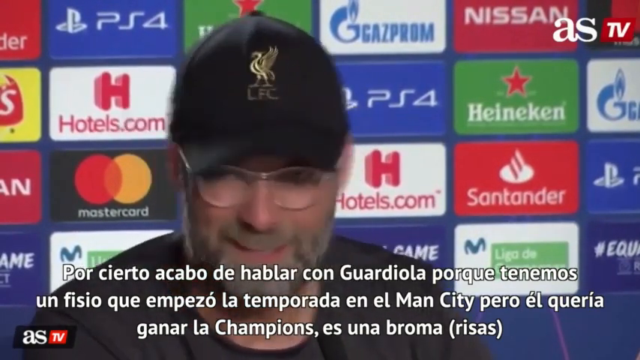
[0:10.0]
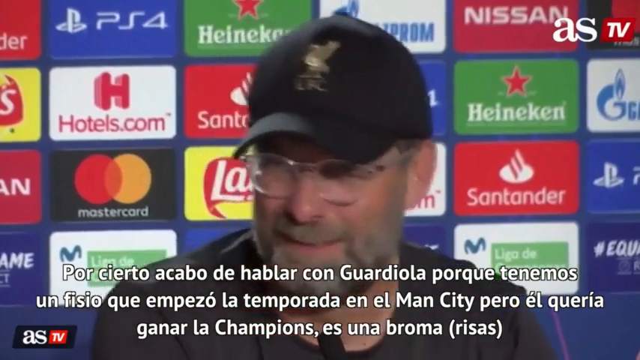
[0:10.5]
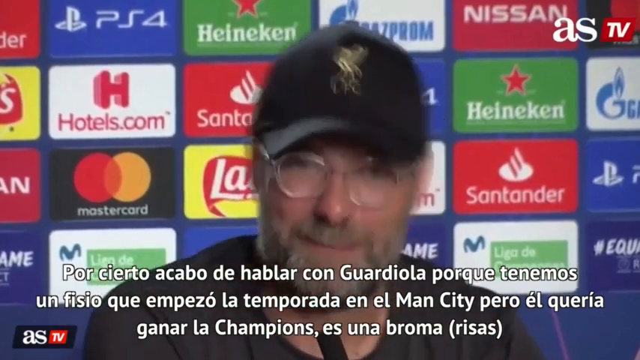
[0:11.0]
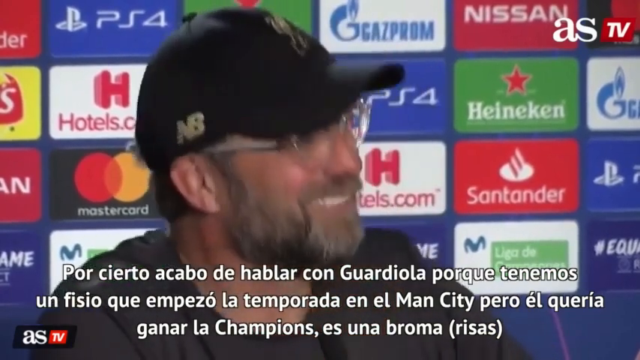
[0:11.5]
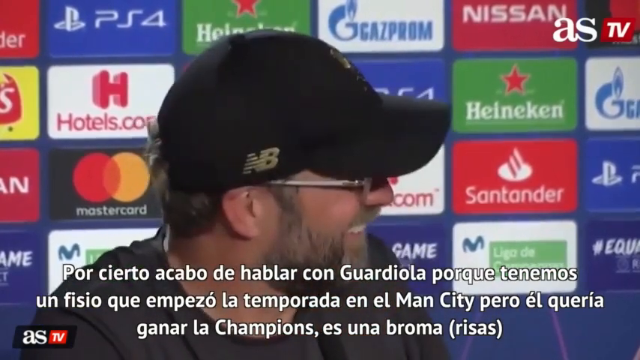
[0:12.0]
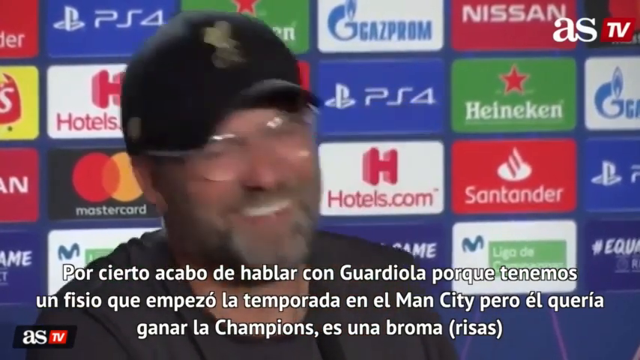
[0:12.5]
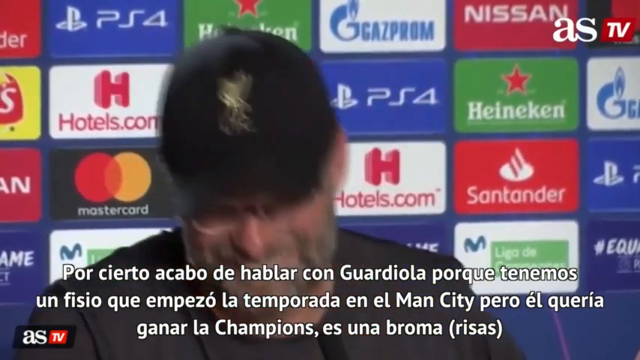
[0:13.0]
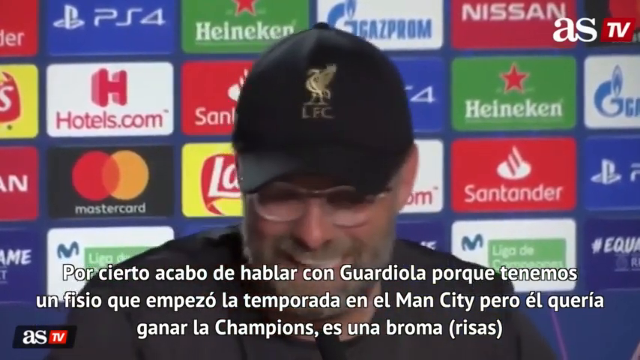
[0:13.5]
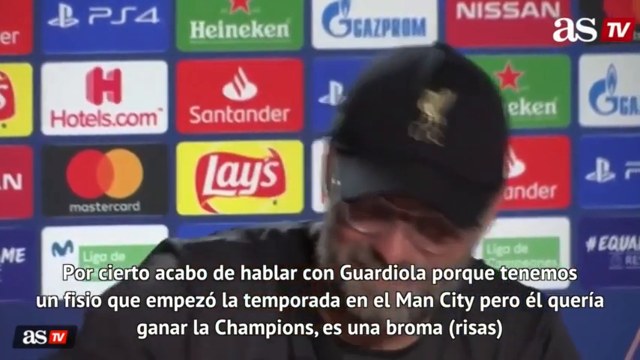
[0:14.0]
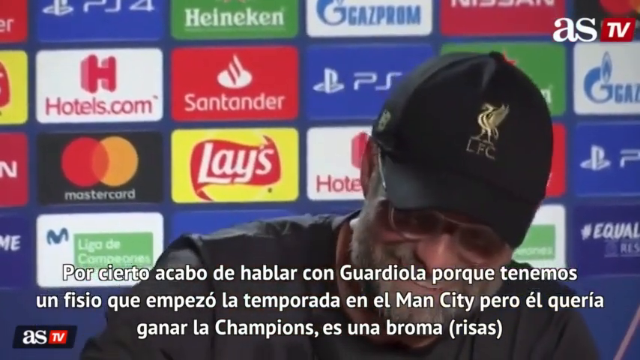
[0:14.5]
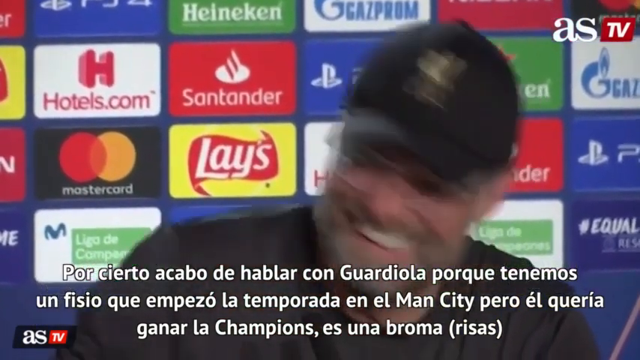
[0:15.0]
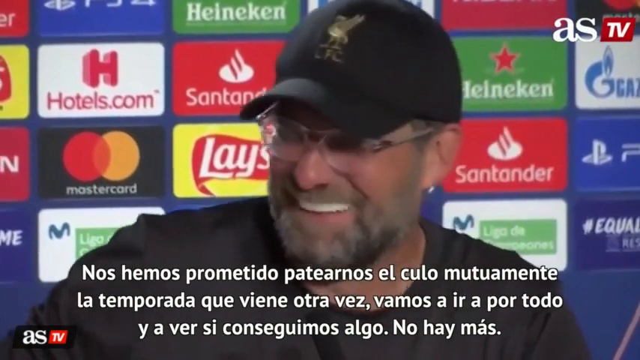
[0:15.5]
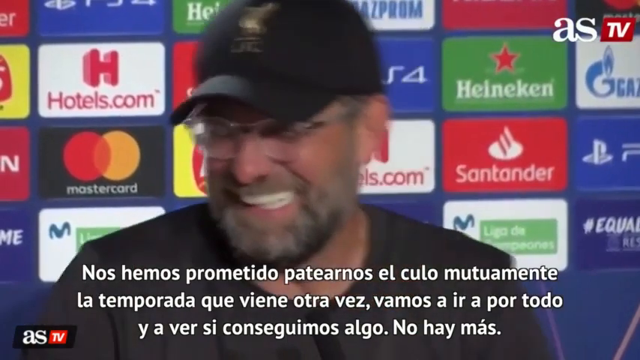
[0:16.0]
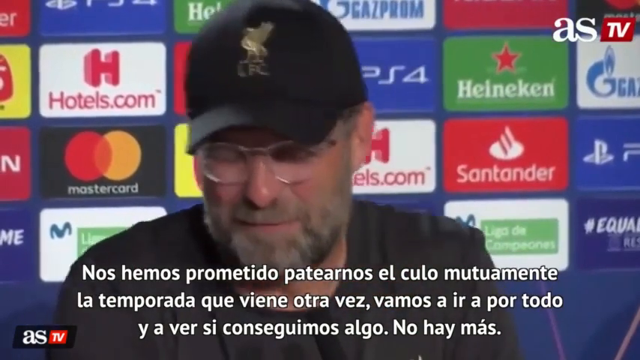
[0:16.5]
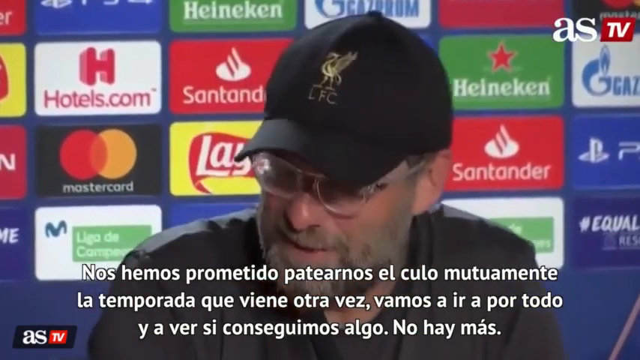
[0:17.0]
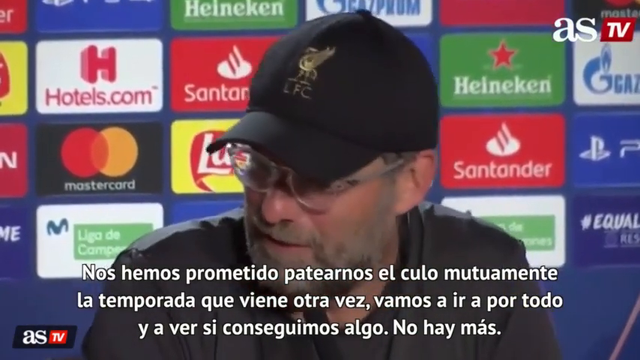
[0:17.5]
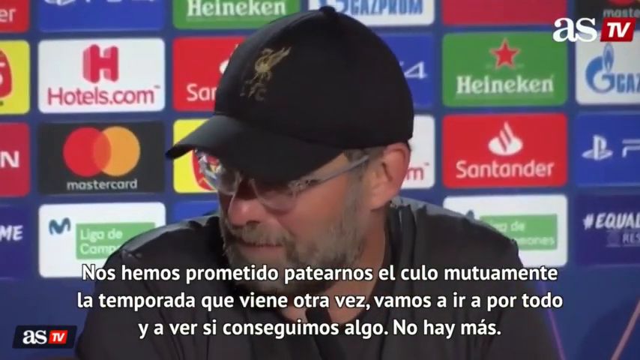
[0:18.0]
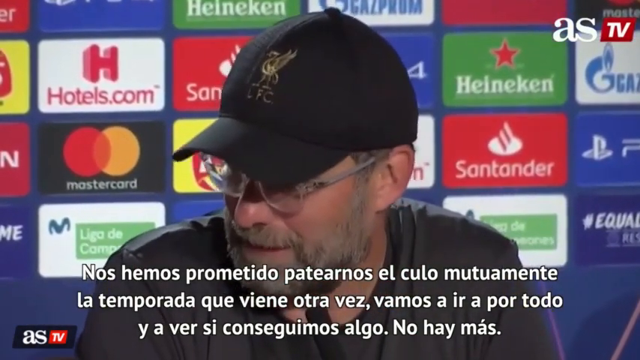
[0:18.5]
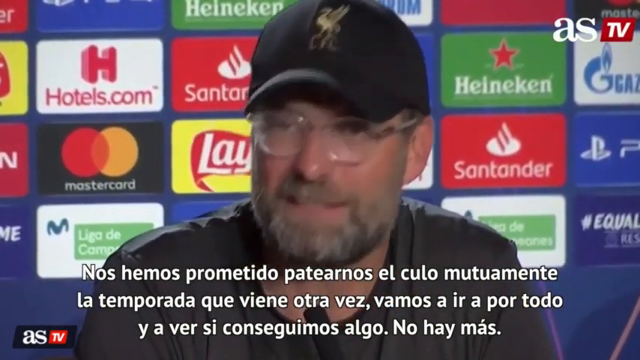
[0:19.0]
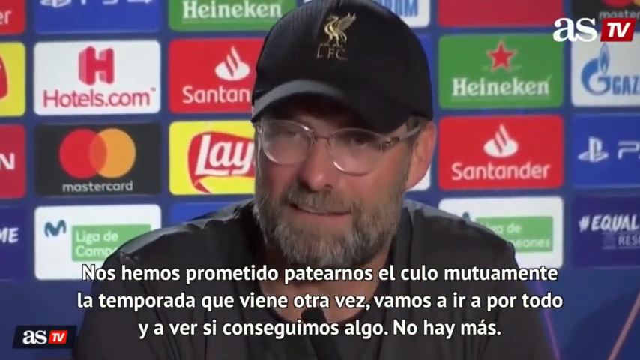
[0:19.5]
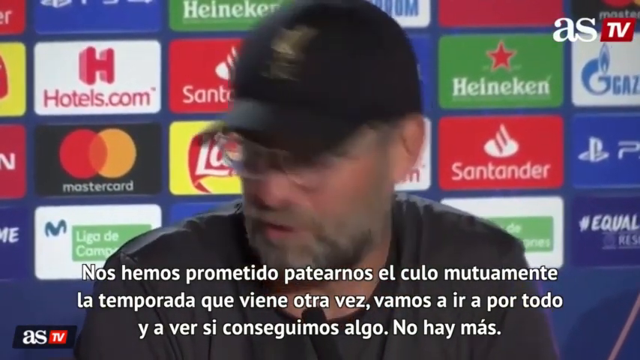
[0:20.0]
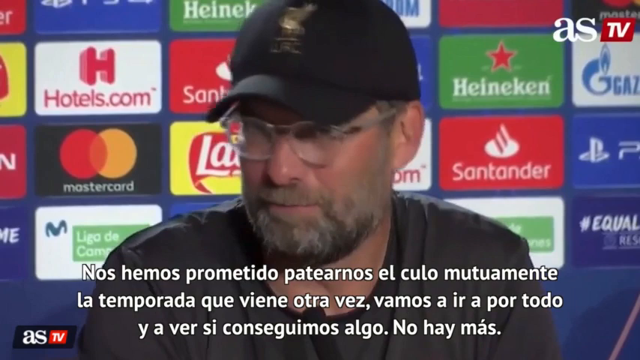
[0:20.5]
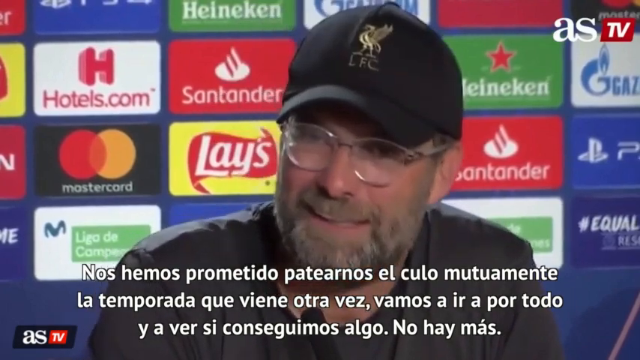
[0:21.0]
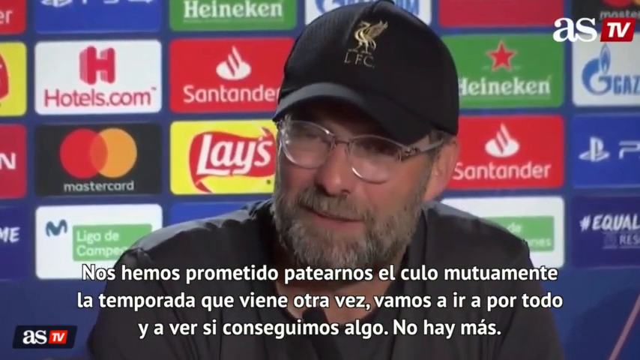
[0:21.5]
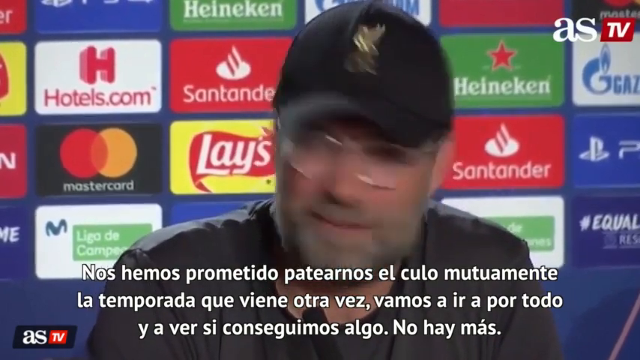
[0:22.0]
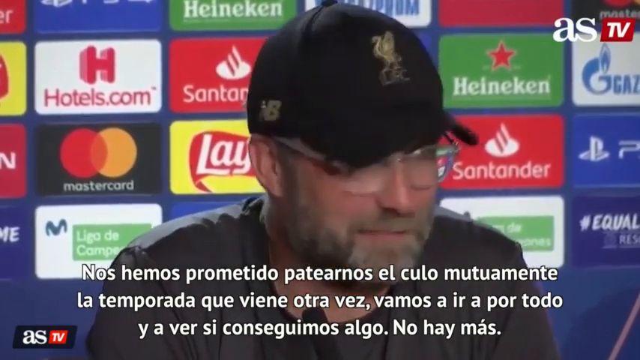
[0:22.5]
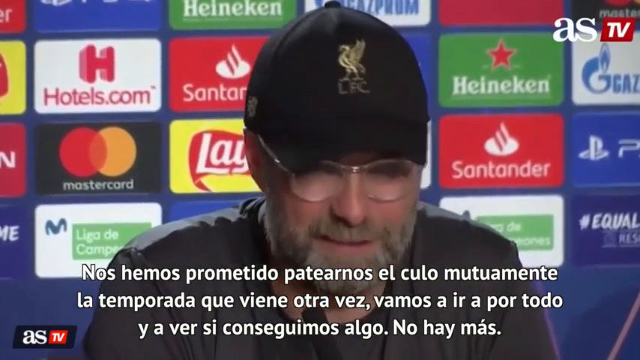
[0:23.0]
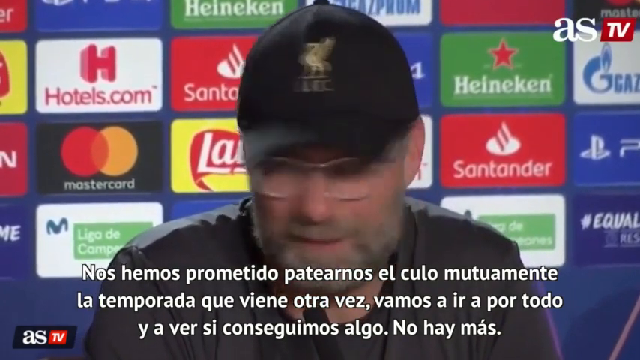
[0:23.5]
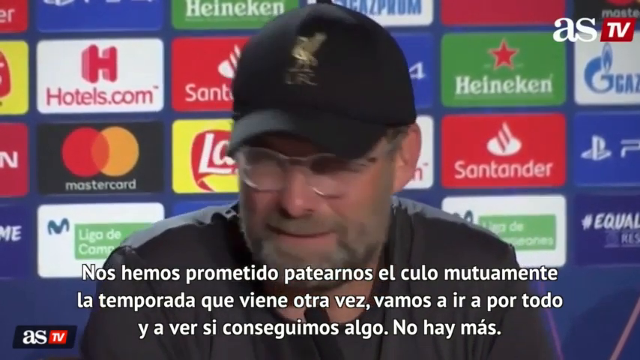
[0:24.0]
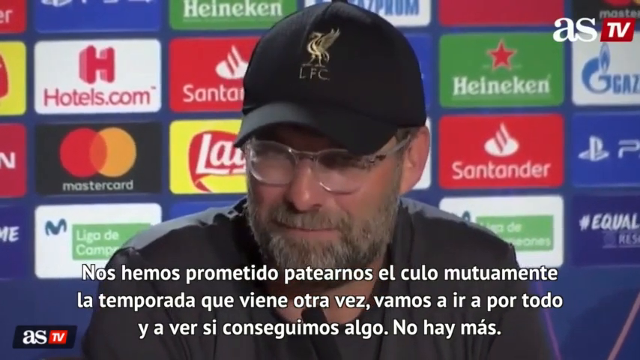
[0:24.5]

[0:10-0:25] The coach's interview continues. Still smiling, he looks quickly to his right and then right back to his left; he mostly looks to the left while being interviewed, though he glances right briefly. He bends forward, smiling, as if someone said something that made him laugh deeply. He looks quickly to the right again and then back to his left. No one is visible on either side of him, but the way he looks in both directions suggests there are people to his left and to his right.